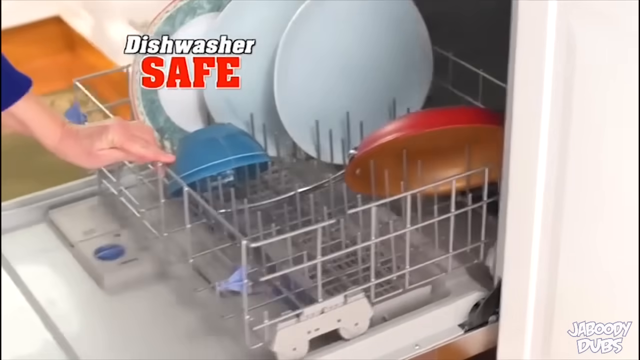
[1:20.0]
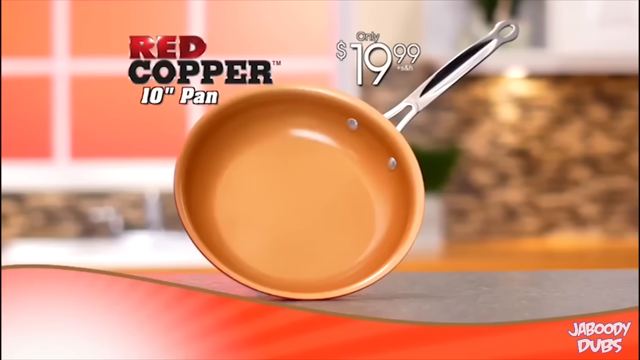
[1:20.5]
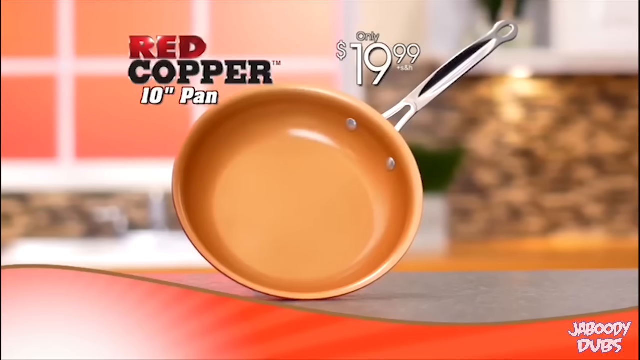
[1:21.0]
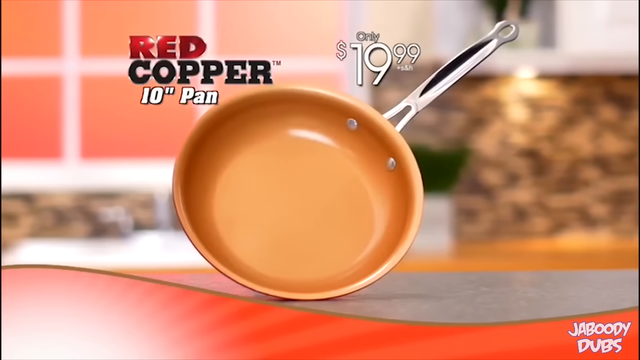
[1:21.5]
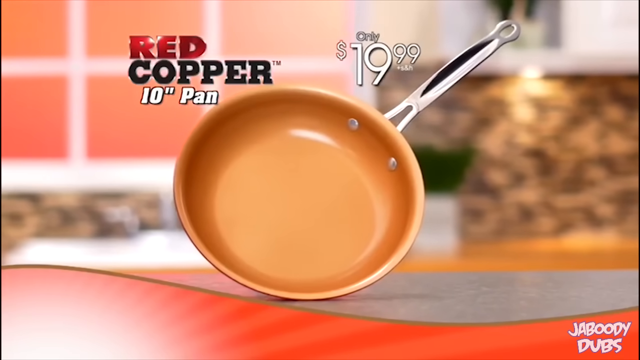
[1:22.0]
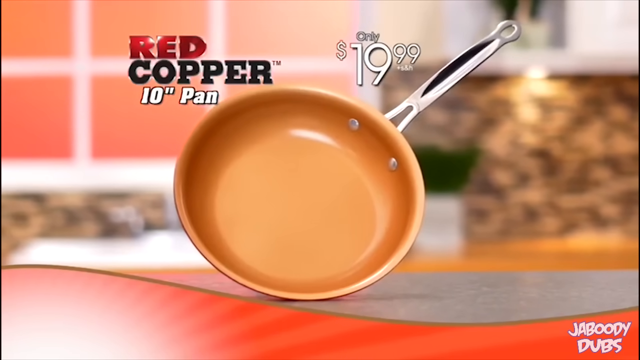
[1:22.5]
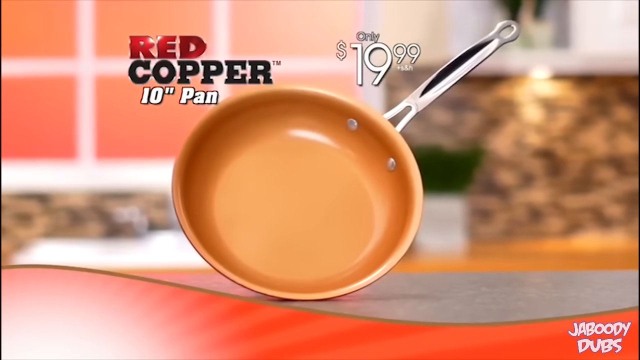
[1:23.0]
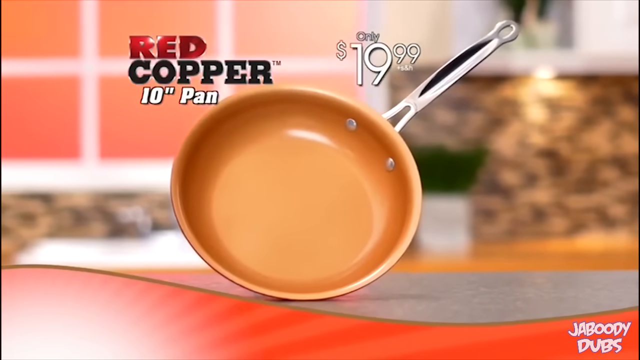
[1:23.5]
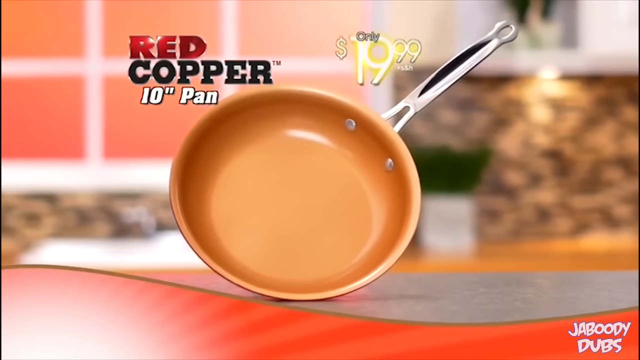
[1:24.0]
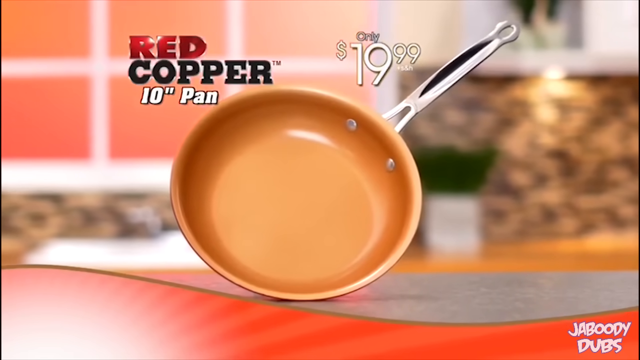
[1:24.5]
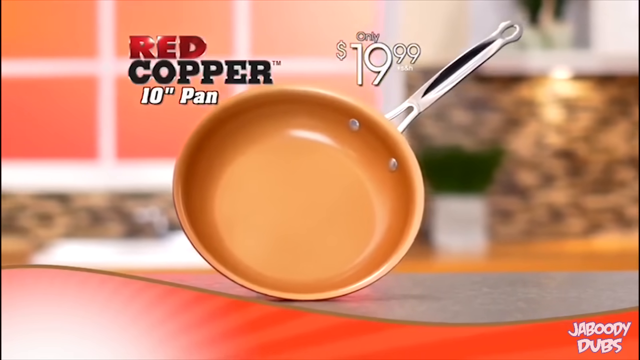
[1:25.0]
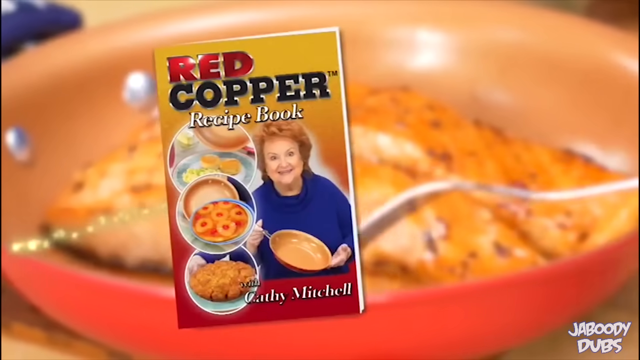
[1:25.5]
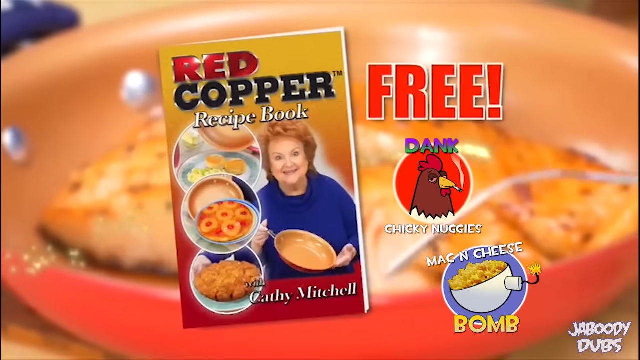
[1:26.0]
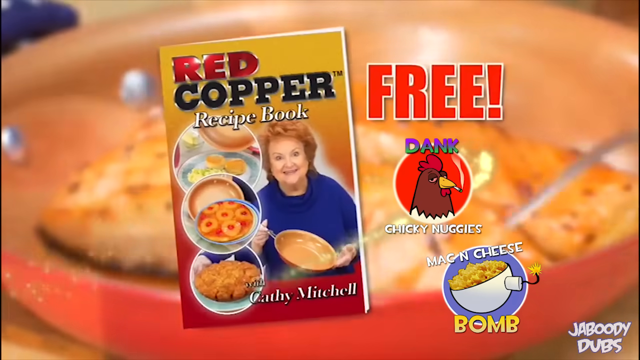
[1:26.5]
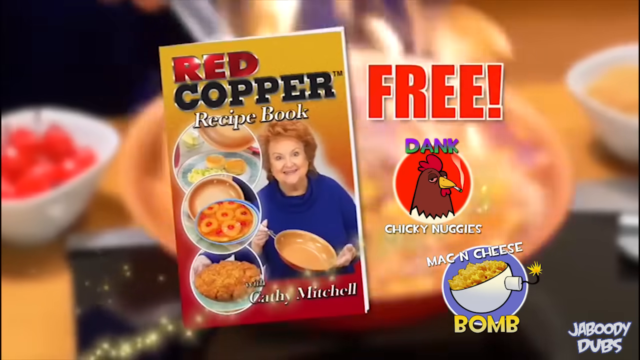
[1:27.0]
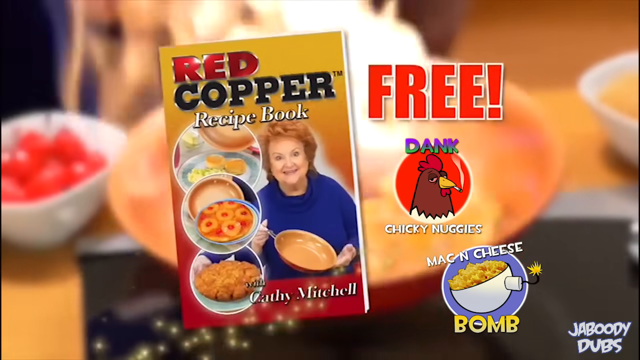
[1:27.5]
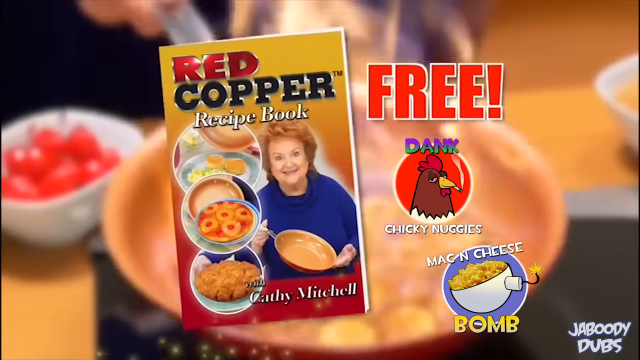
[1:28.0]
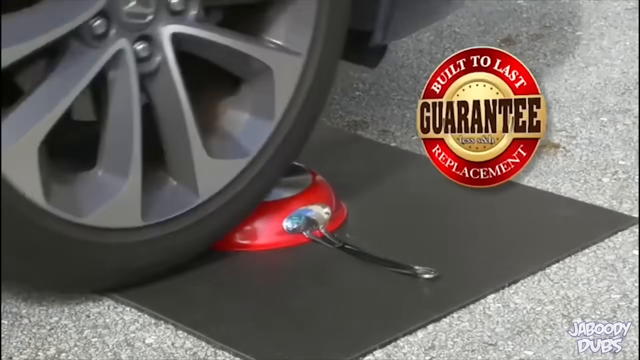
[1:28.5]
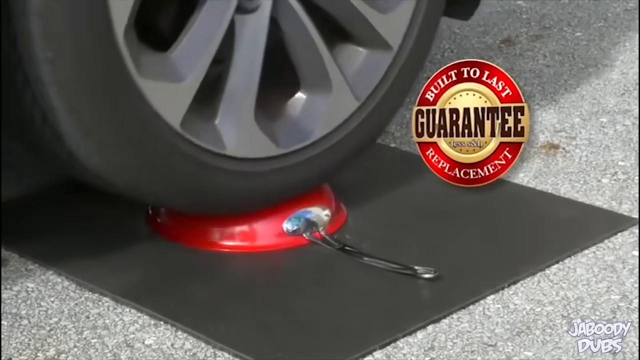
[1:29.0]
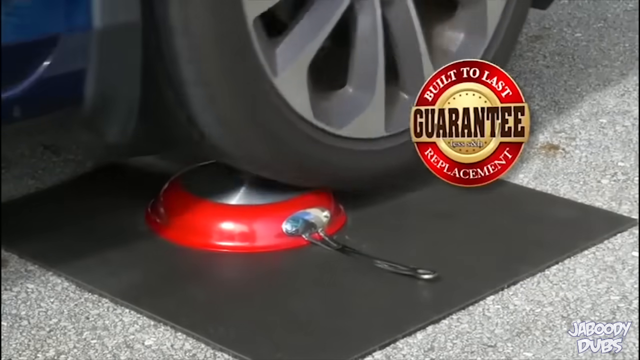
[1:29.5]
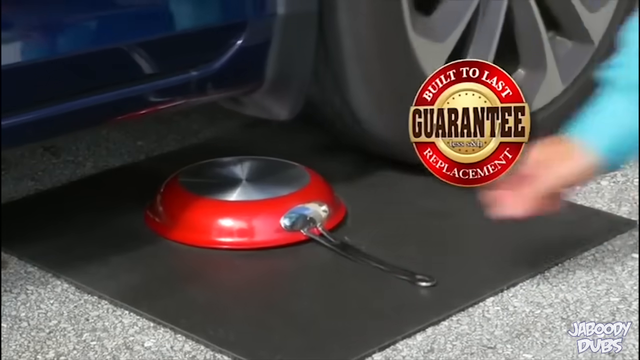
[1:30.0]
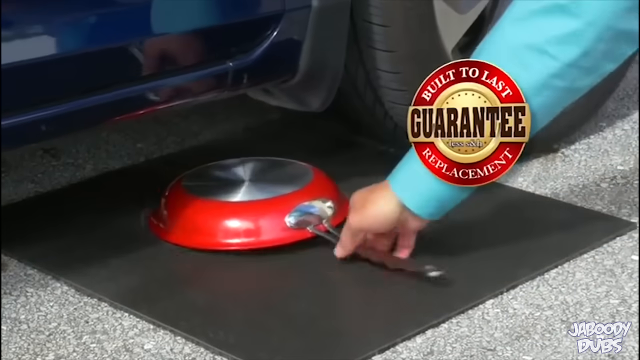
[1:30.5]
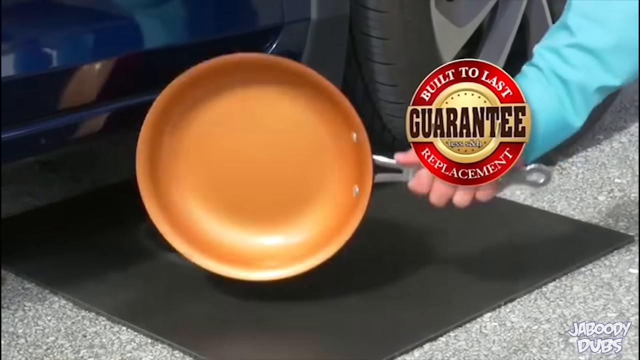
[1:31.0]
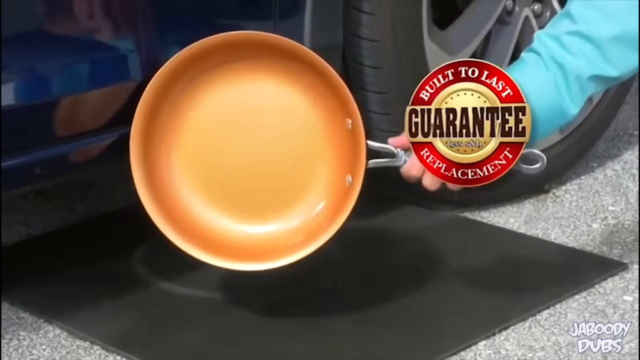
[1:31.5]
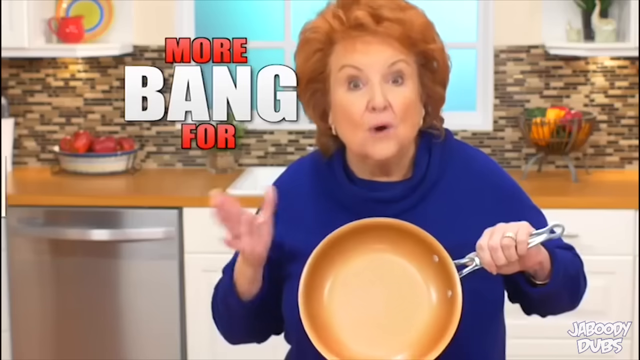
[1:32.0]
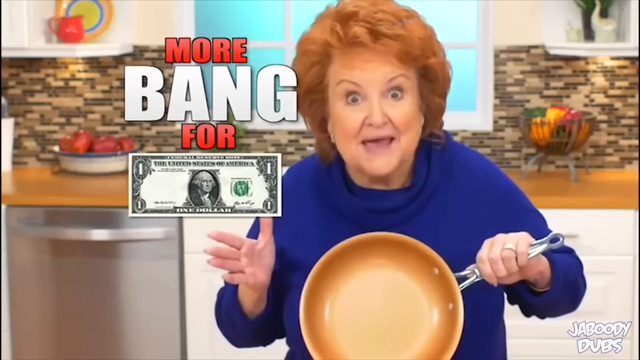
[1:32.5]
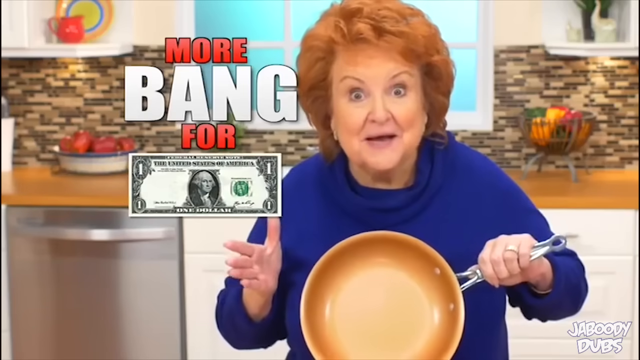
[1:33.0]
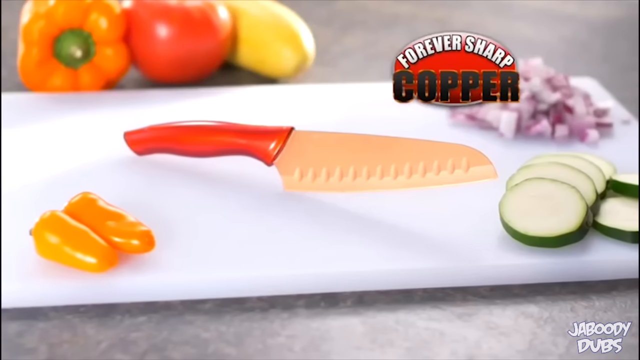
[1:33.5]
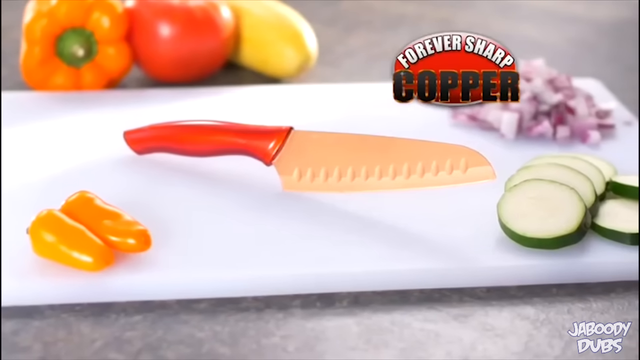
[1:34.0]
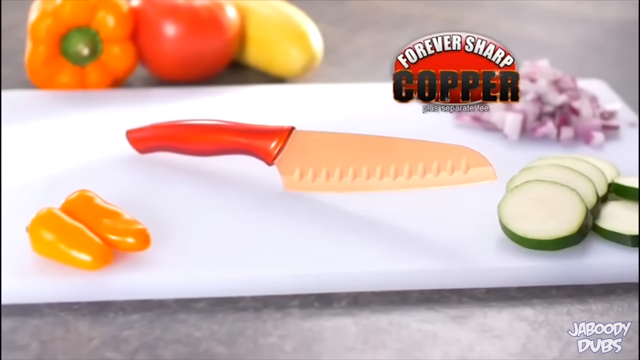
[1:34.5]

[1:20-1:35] A skillet is labeled "red copper 10 inch pan". A car runs over the skillet, and the skillet does not break. A knife that also has some copper on it is shown, with a price of $19.99, and text says it is built to last and guaranteed. A woman has what seems to be a recipe book using the red copper skillet, apparently with recipes for mac and cheese, and it comes with a sharp blade, apparently a knife. The skillet is put in a dishwasher. Text reads "free chicken nuggets" and "forever sharp copper", a price of 1099 keeps being shown, and text says it is a bang for your buck. A cookbook by someone named Kathy Mitchell is shown. The video cuts back to the pan being run over by a car, and it does not bend.